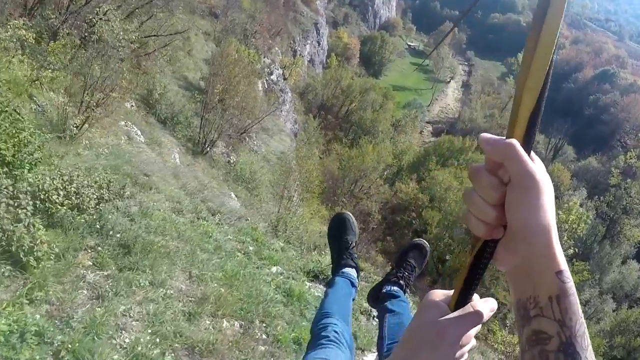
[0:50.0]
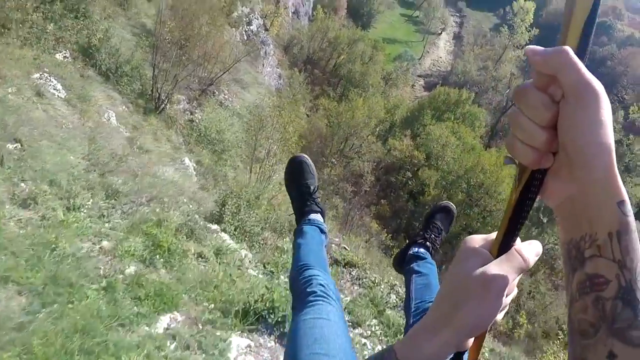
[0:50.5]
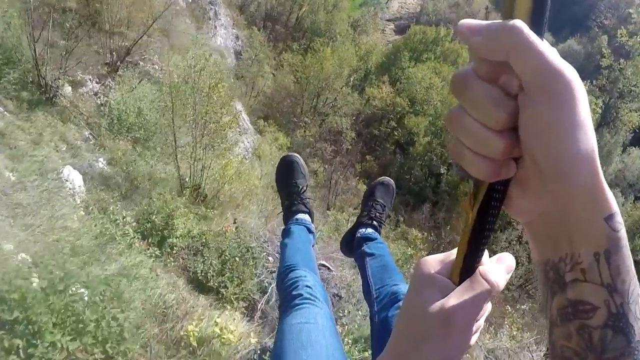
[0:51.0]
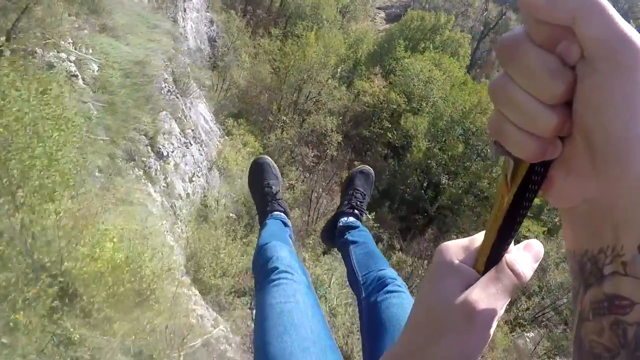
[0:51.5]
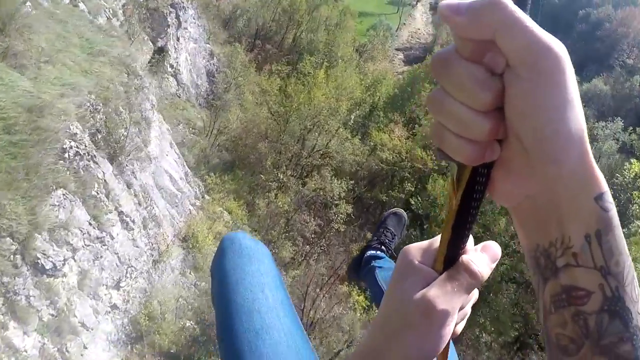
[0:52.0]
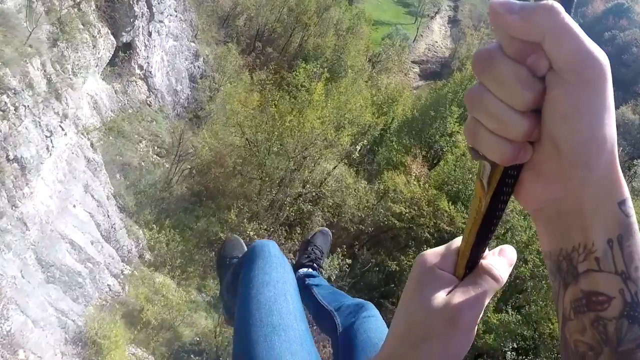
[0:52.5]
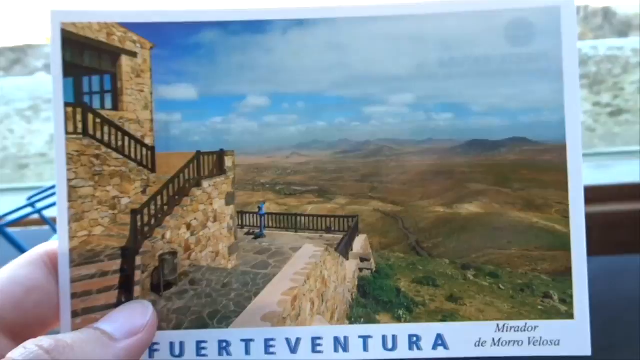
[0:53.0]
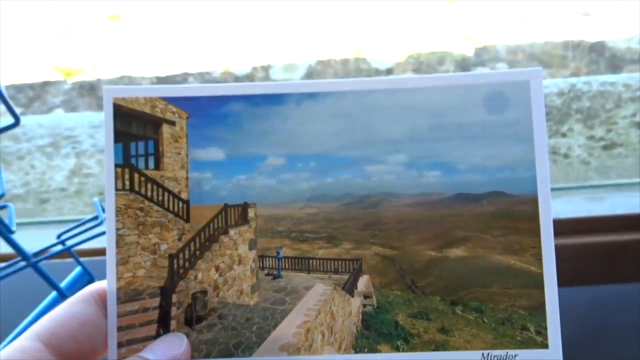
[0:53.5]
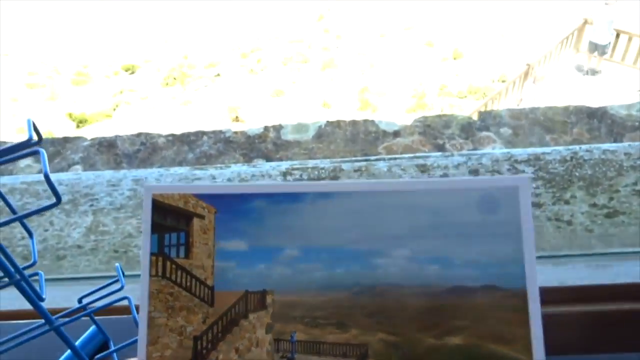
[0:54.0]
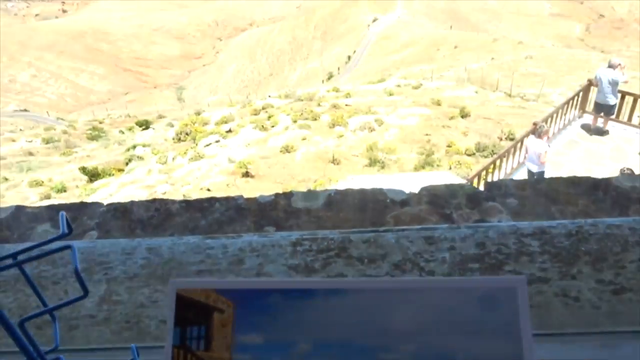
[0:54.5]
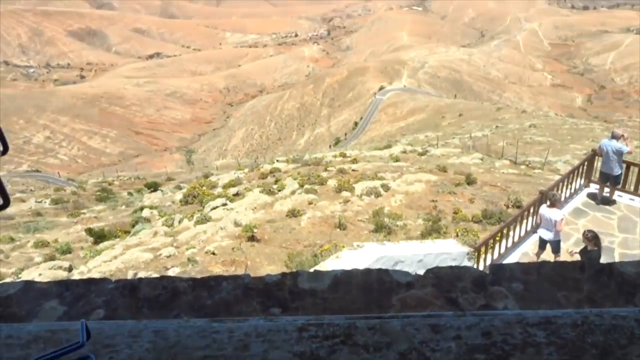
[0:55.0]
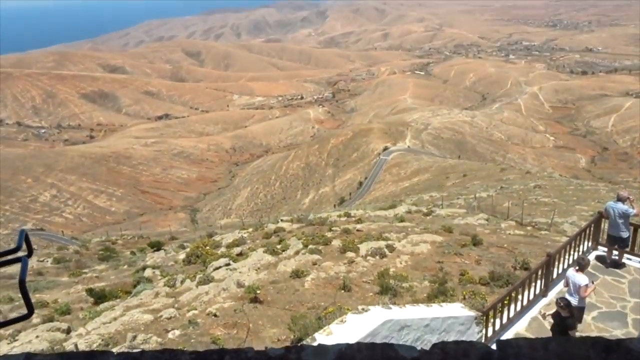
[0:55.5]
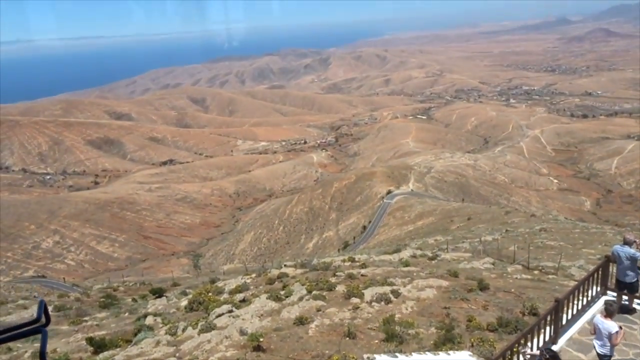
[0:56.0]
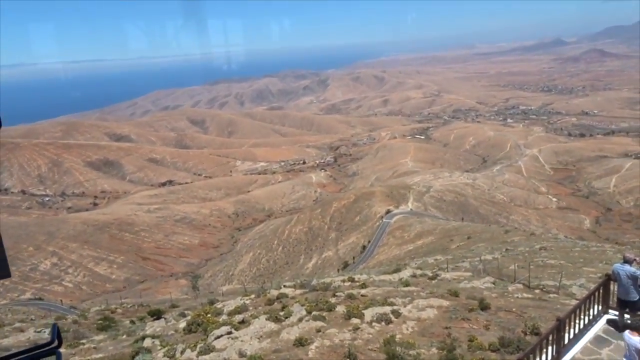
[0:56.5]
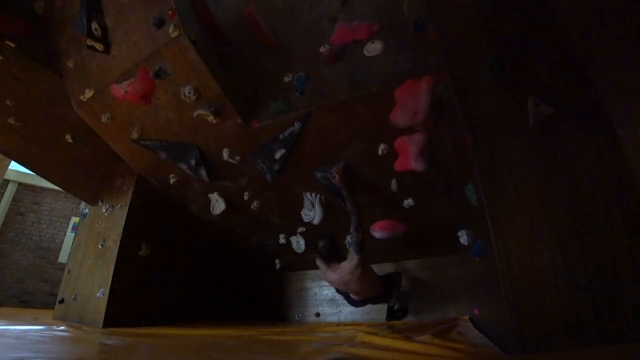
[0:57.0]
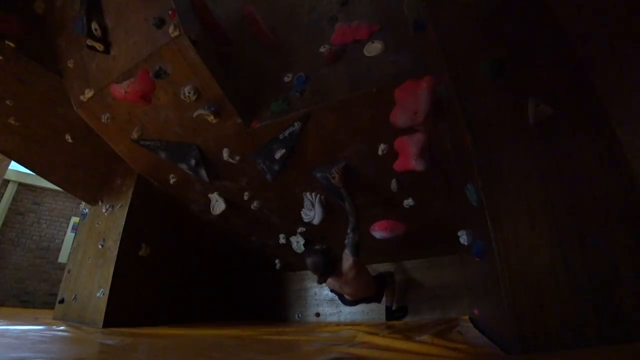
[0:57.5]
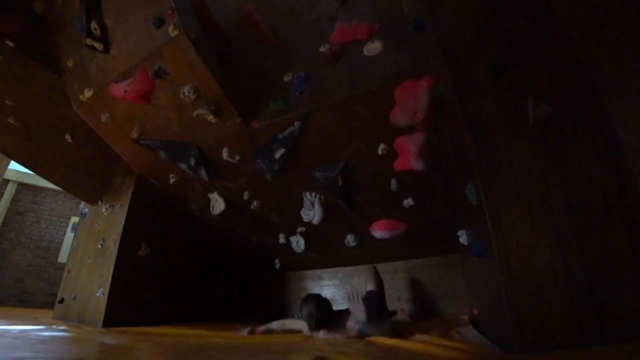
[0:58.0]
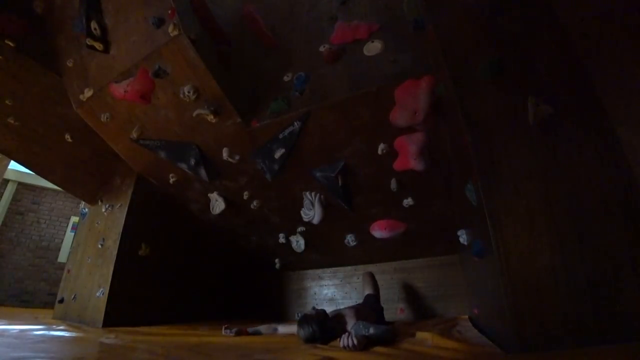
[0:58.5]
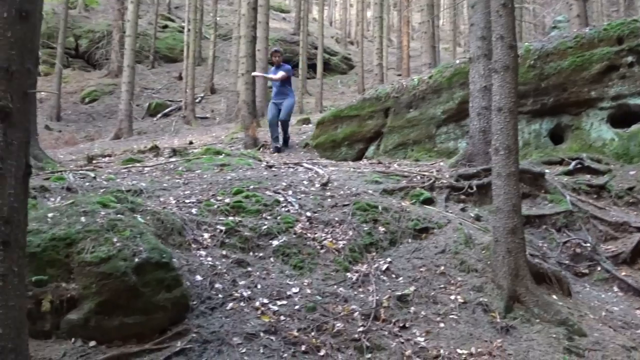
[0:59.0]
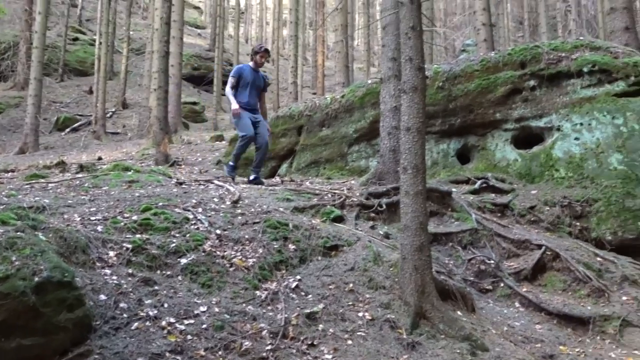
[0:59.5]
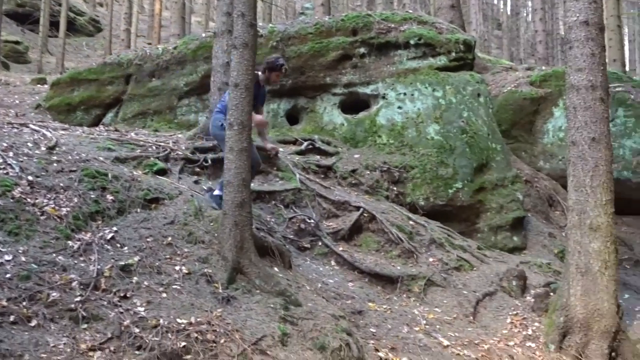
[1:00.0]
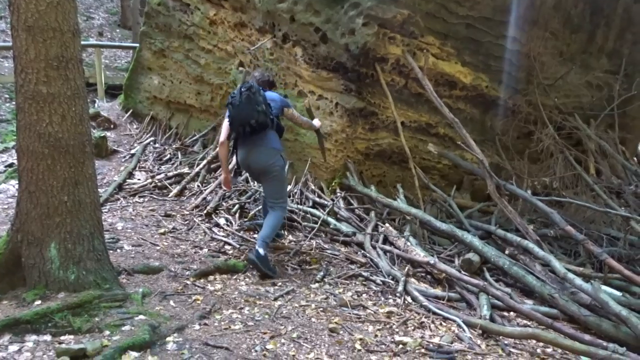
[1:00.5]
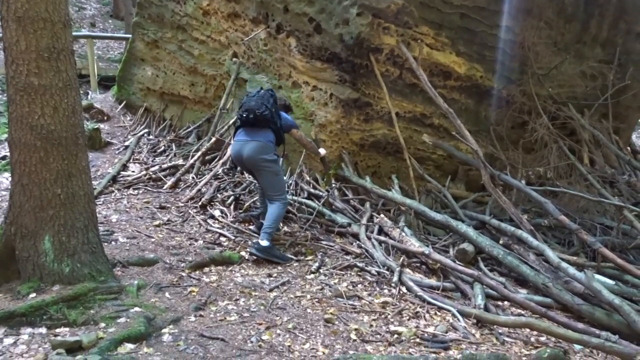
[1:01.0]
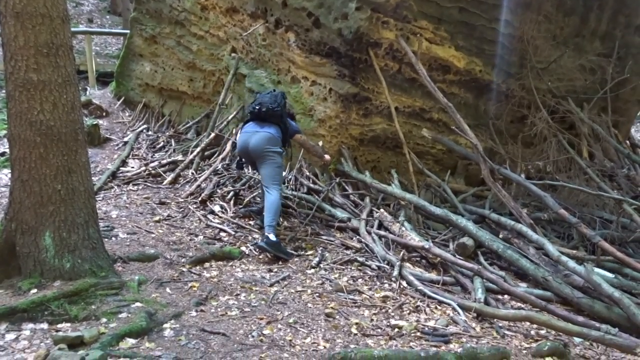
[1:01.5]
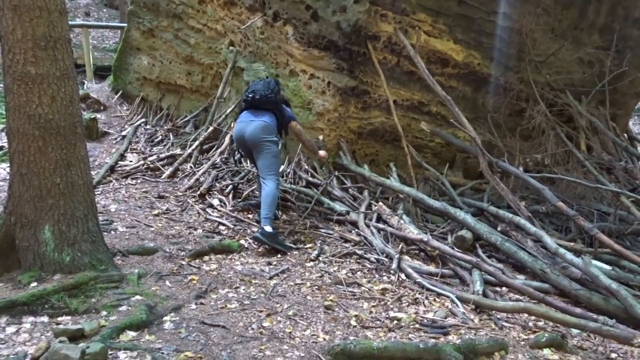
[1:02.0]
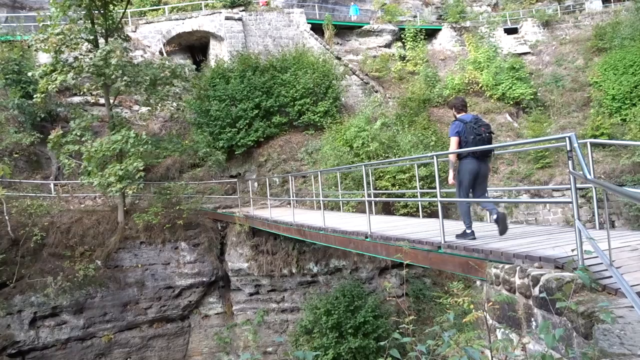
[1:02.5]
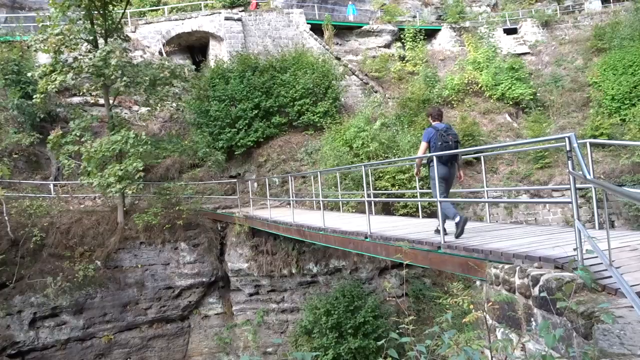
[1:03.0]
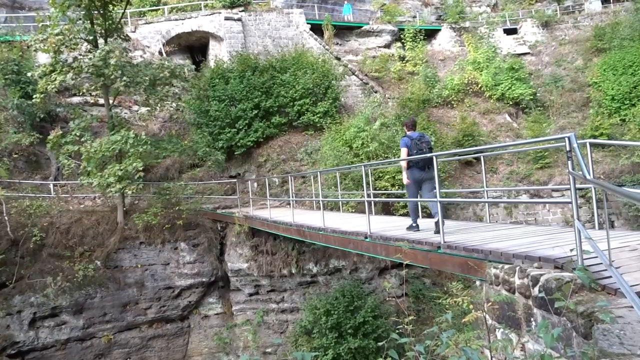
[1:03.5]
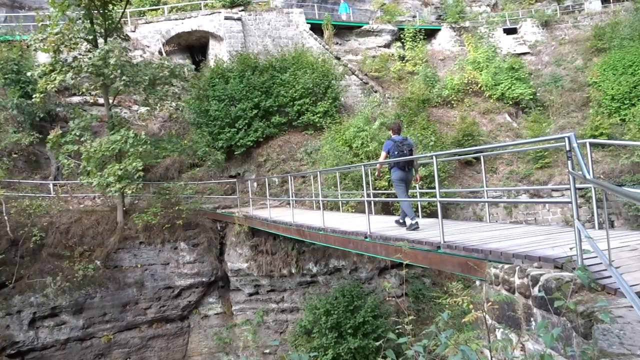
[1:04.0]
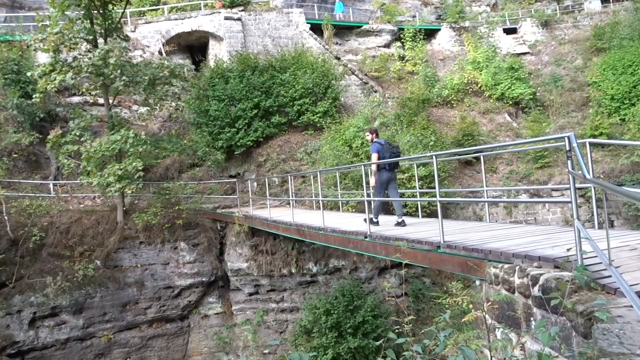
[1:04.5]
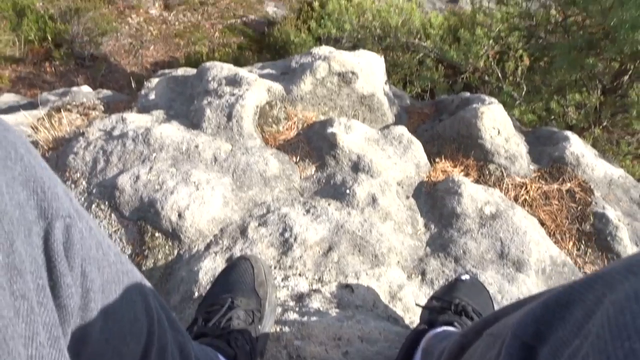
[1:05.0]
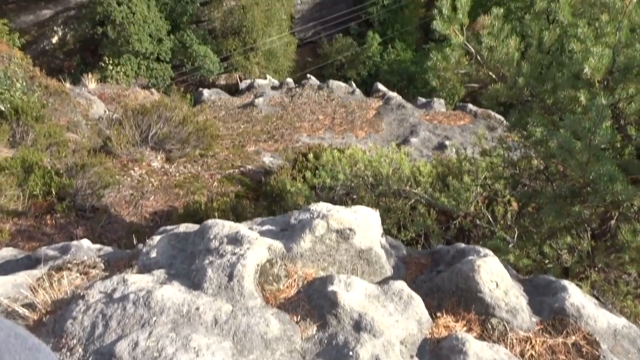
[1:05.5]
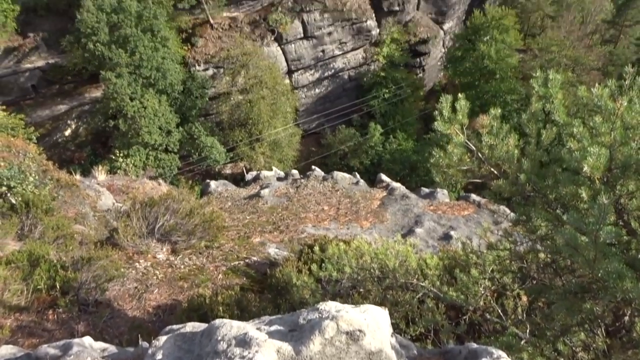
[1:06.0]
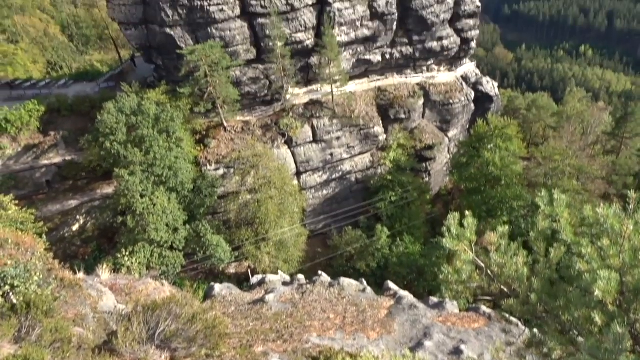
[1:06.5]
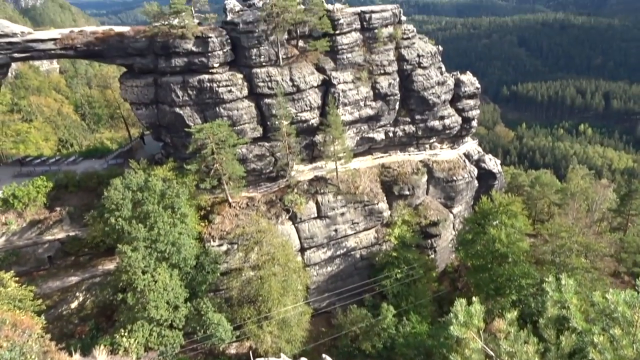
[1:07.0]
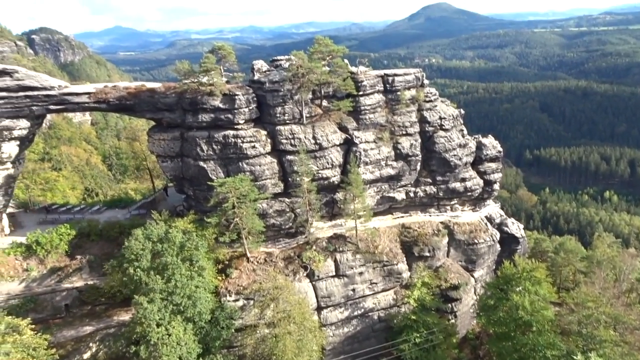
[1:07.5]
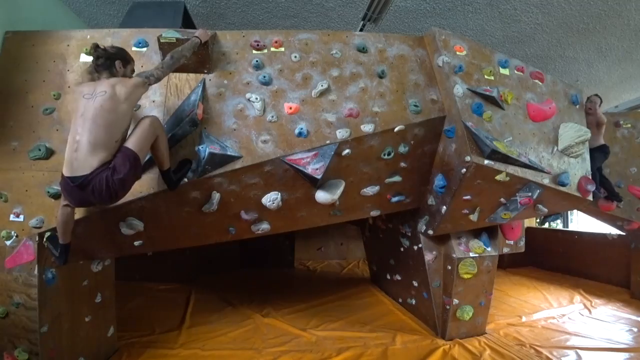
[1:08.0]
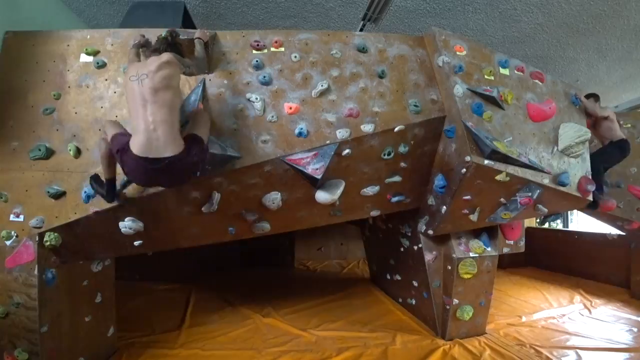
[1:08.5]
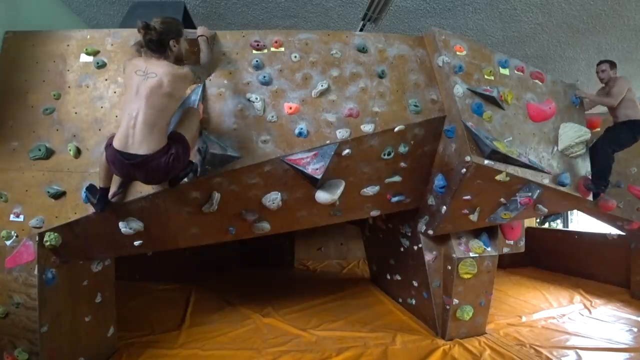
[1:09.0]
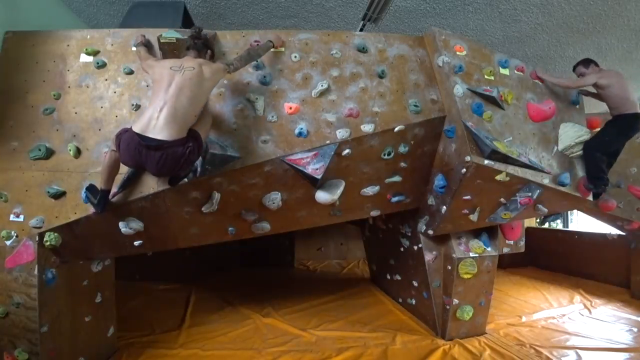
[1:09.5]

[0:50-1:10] The viewpoint is that of a person swinging on a rope or a zipline: their feet, in blue denims, are stretched out in front of them, and they are holding on tight. A hand holds an image, and a view from above overlooks a large expanse of hilly terrain with brown soil. In a dark view, a person rock-climbs an indoor rock-climbing wall. A person in a blue T-shirt and blue jeans with a black backpack hikes through the woods and bends down to pick some twigs. The same person, a man, then walks over a footbridge and turns his head slightly to the left. A rocky terrain with lots of vegetation appears; the camera pans forward, showing more rocks and dense green vegetation down below, with hills in the distance. A close-up shows two people rock climbing indoors on a rock climbing structure with lots of angles.